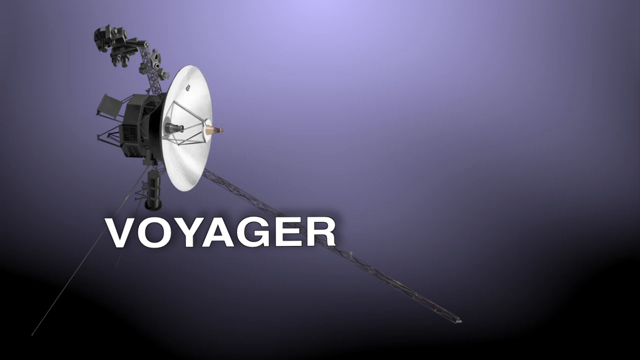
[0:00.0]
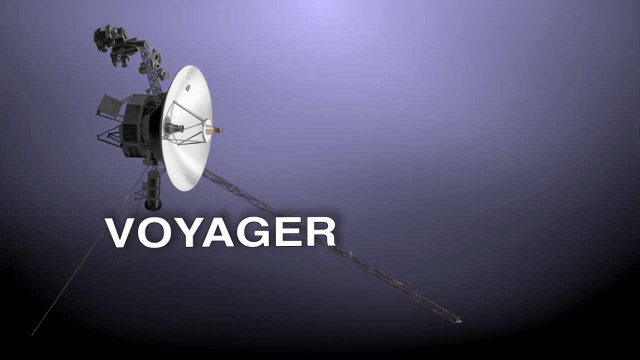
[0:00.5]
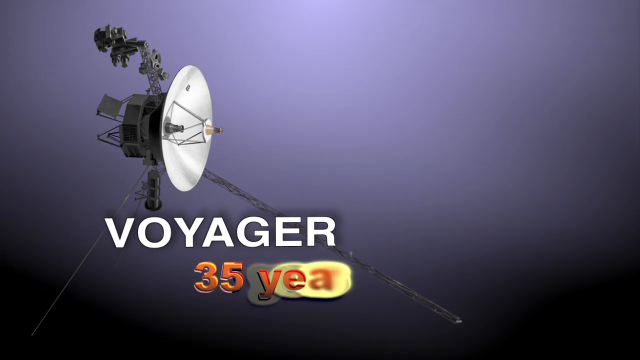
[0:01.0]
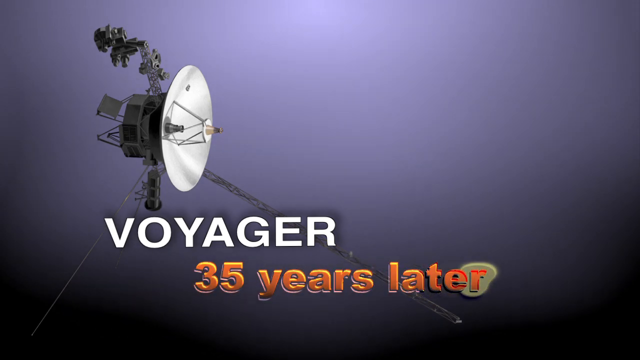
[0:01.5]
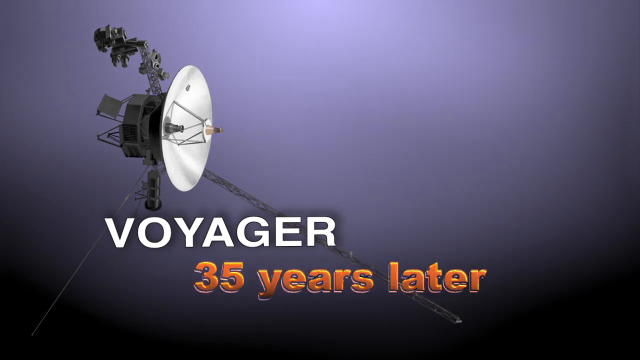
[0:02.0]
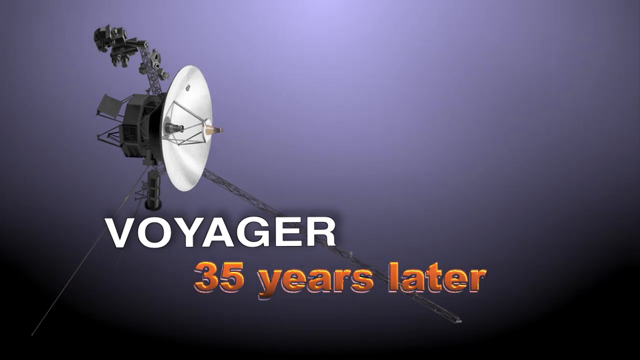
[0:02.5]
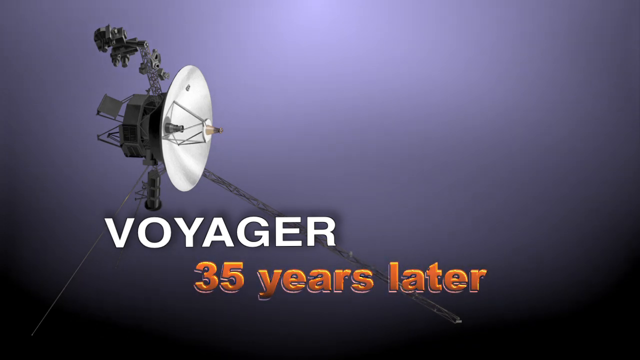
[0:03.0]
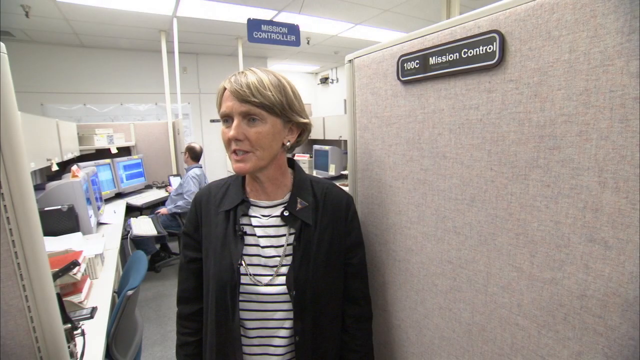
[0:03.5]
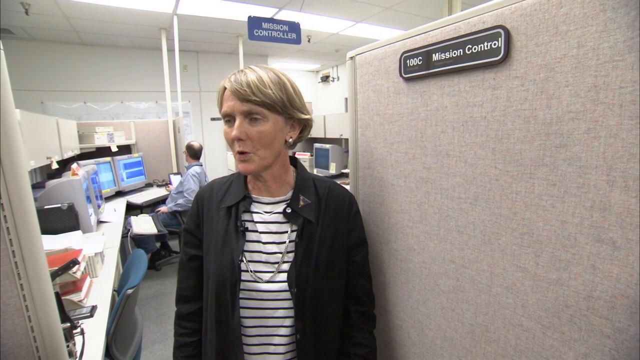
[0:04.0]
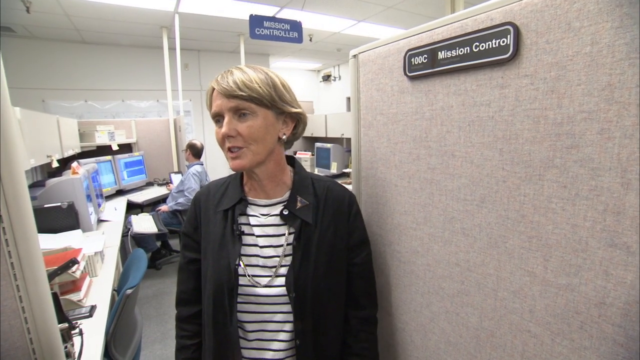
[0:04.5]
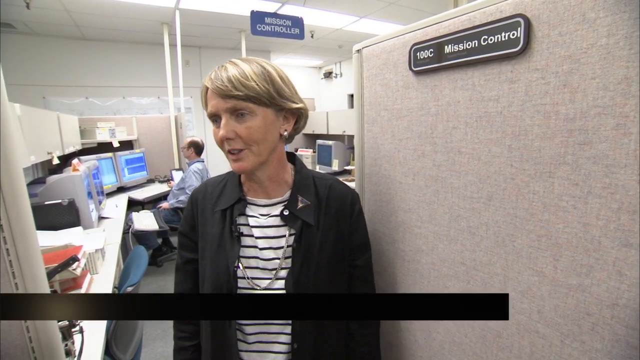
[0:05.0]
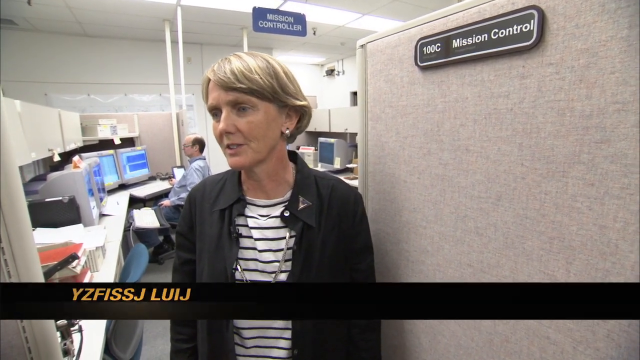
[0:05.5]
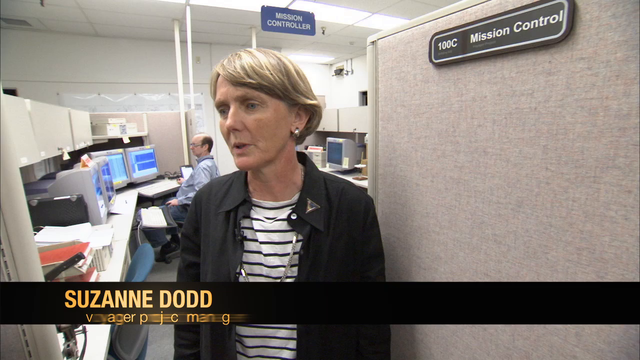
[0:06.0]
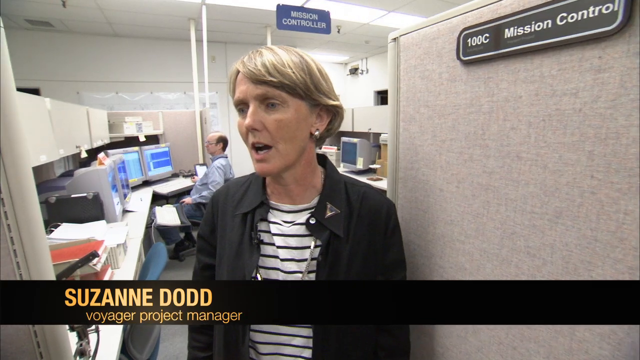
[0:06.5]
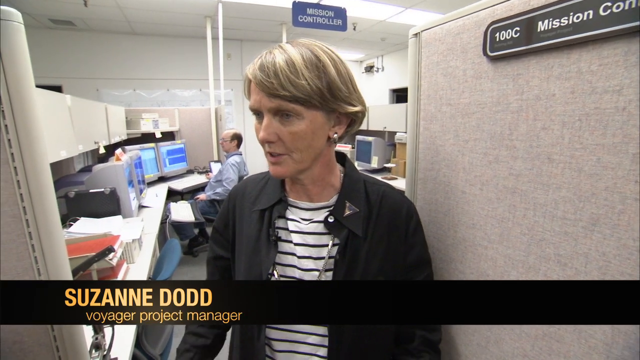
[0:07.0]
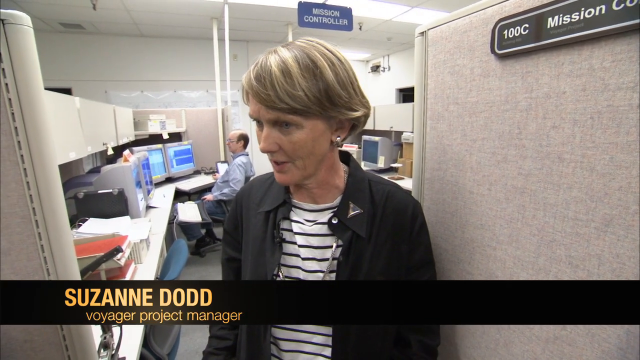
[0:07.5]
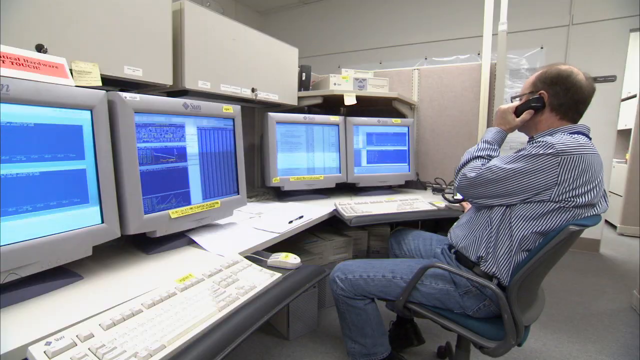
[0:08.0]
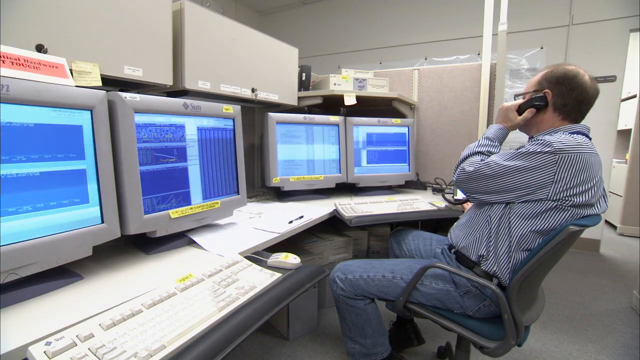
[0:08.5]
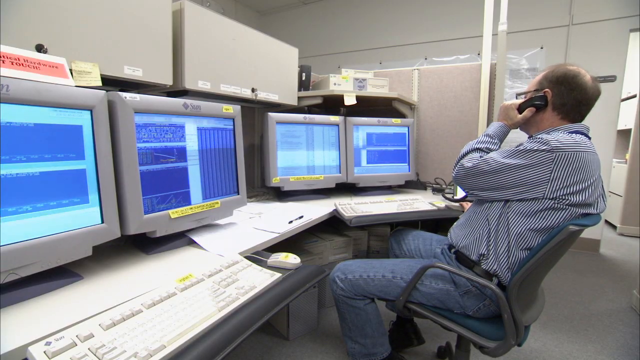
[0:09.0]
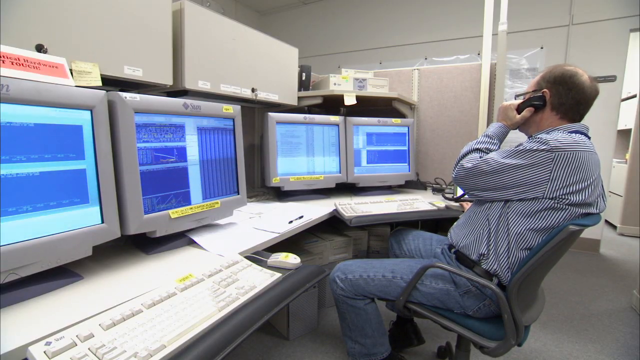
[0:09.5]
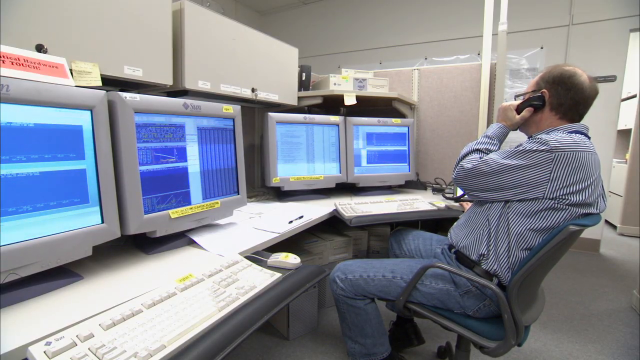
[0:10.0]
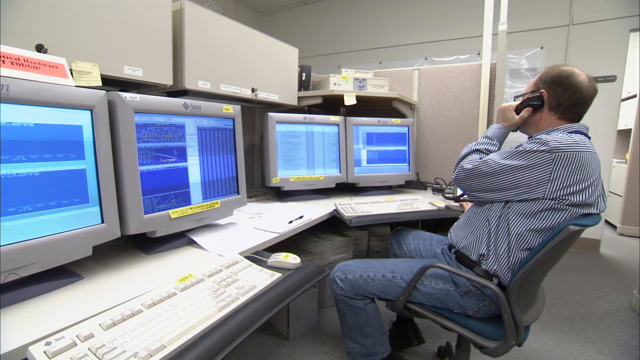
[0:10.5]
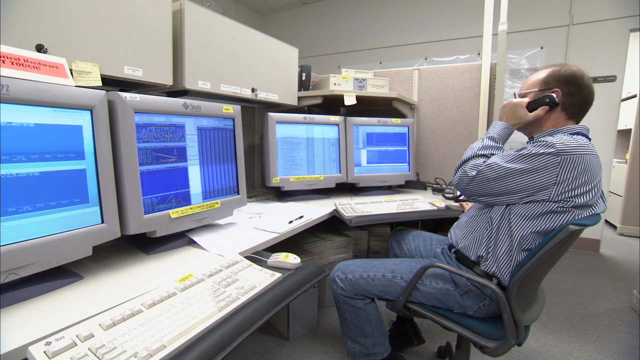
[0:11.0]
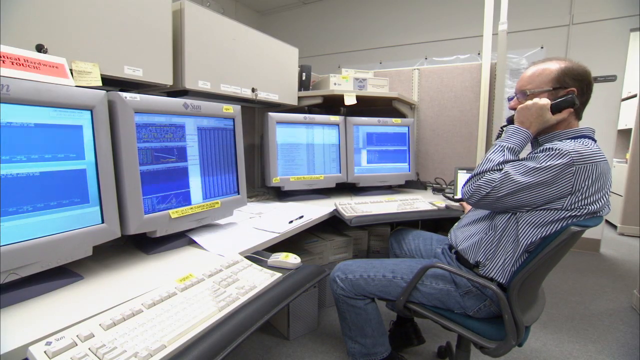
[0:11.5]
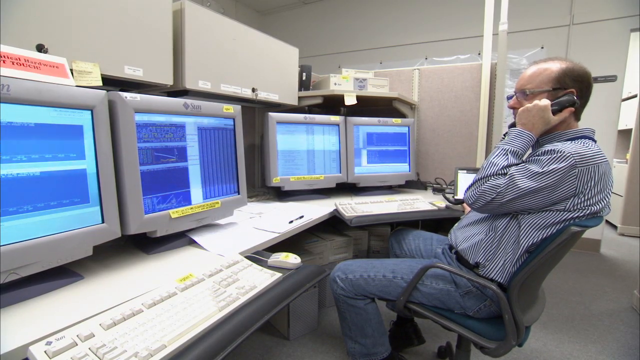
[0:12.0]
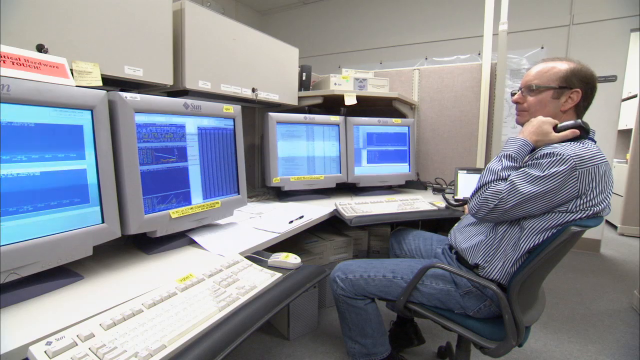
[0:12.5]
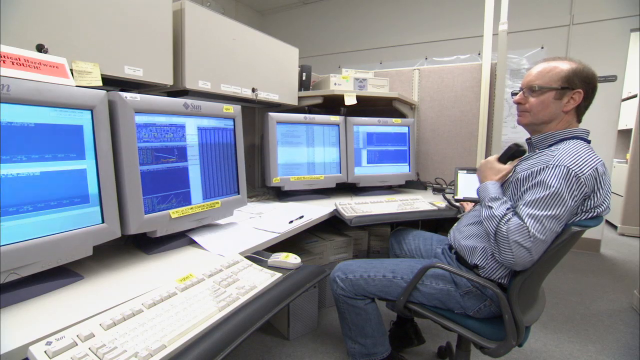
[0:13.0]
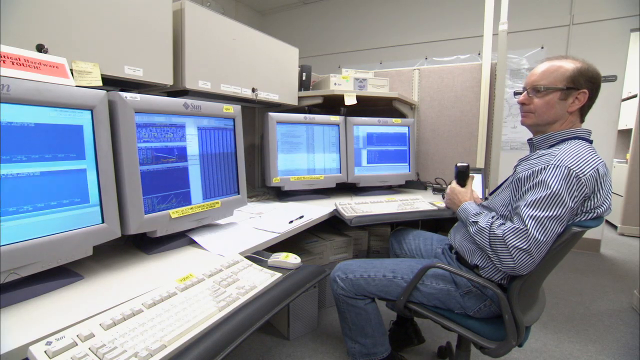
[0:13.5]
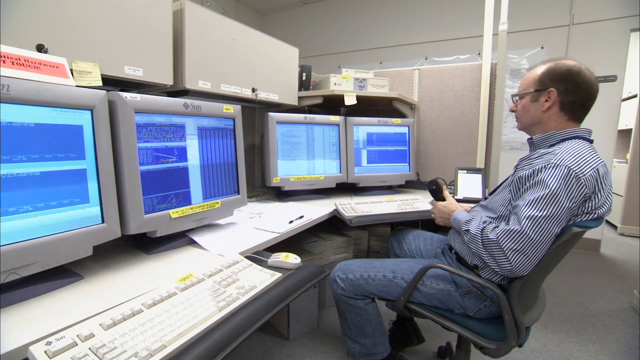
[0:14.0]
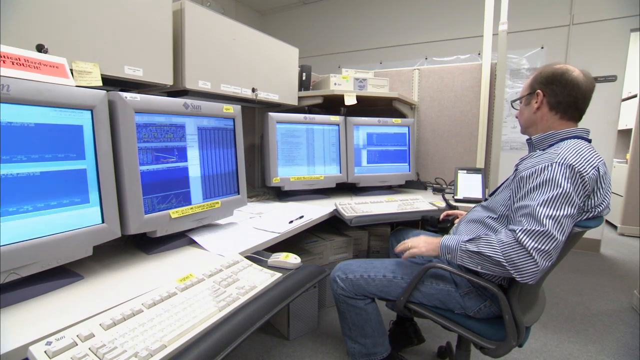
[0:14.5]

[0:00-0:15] A person on a black phone looks at four computers. A satellite appears, and a woman named Suzanne Dodd talks about it. A man is again talking on a phone in front of four computers, and the text "Voyager 35 years later" appears. A plaque on the wall reads "100C Mission Control"; the walls are beige and the flooring is gray. The satellite is shown again. A blue sign with white text in the room says "Mission Controller", and there are two keyboards on the man's desk. The text "35 years later" appears again.